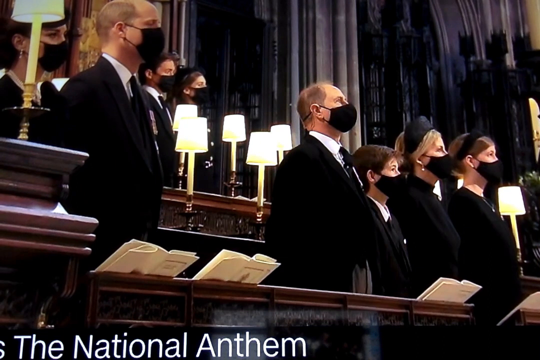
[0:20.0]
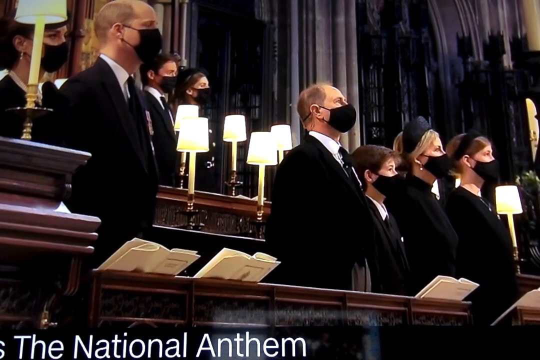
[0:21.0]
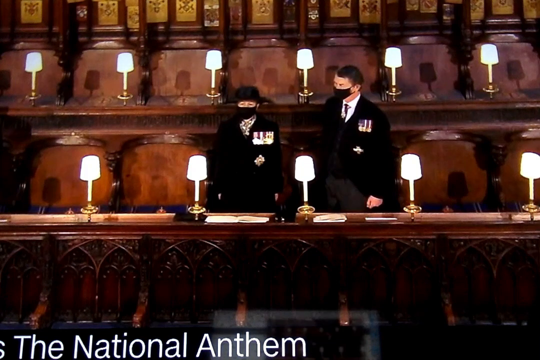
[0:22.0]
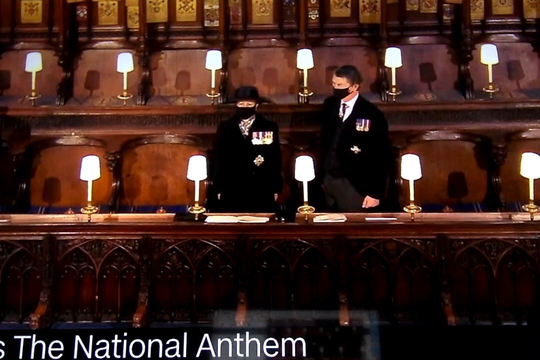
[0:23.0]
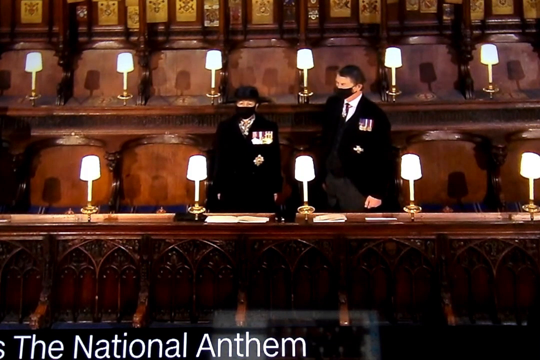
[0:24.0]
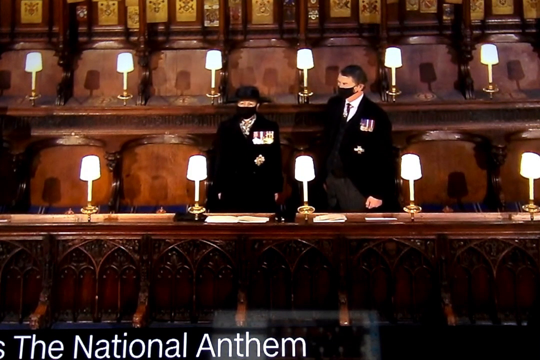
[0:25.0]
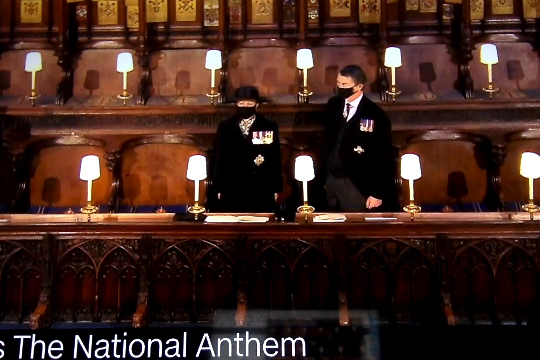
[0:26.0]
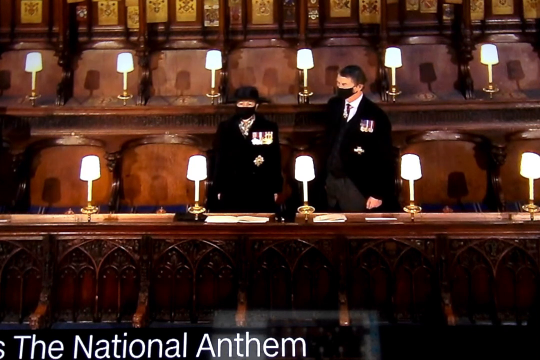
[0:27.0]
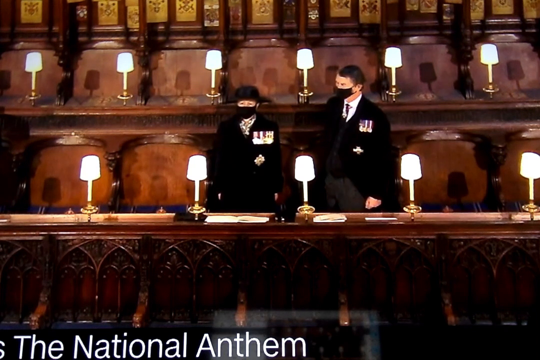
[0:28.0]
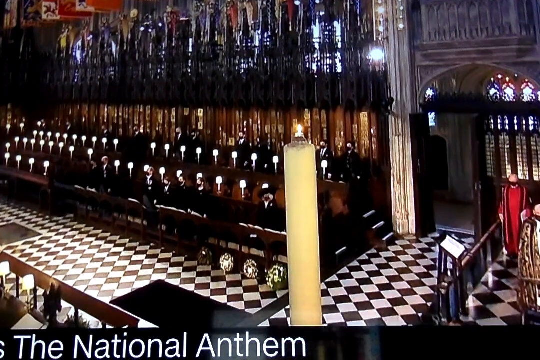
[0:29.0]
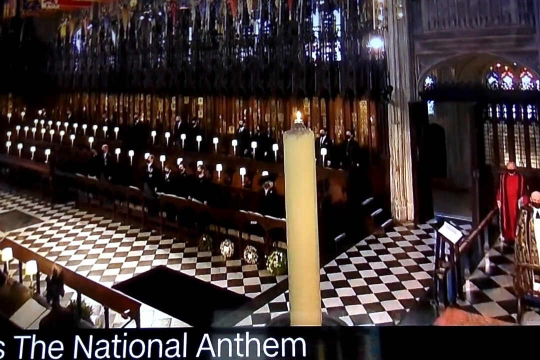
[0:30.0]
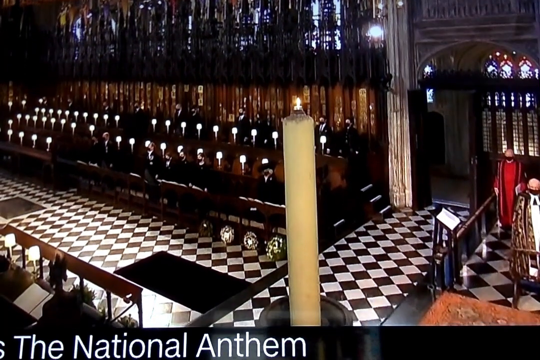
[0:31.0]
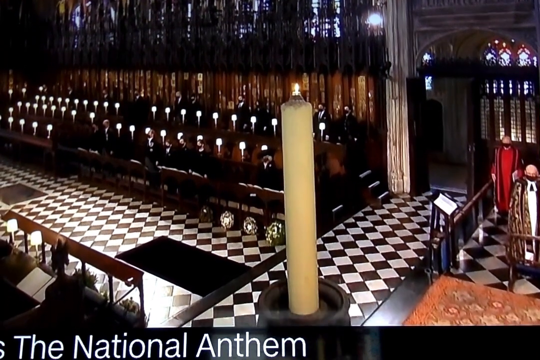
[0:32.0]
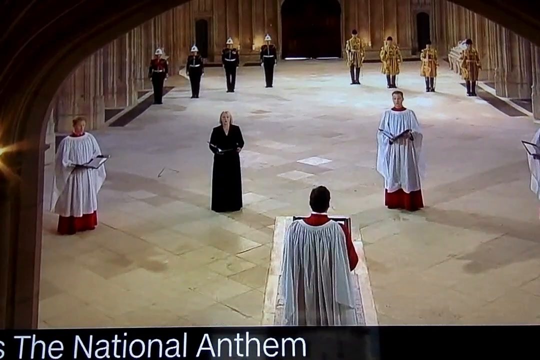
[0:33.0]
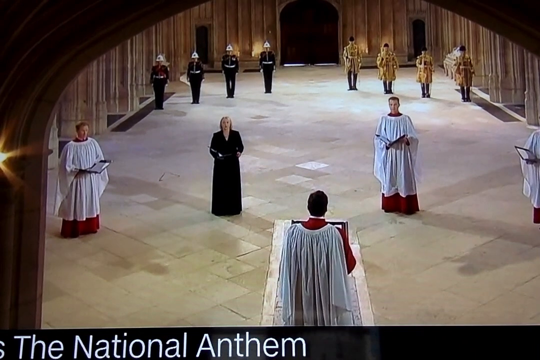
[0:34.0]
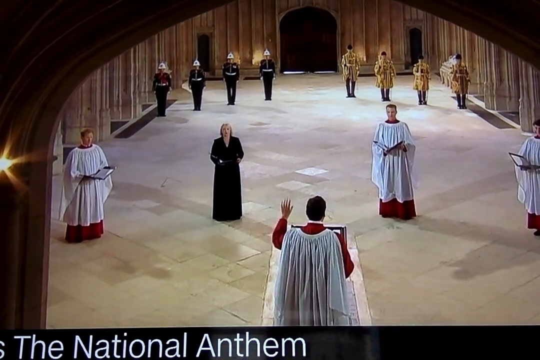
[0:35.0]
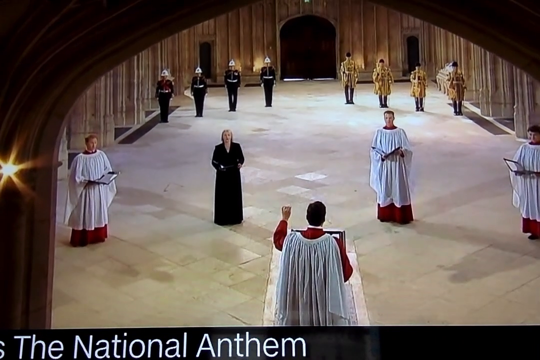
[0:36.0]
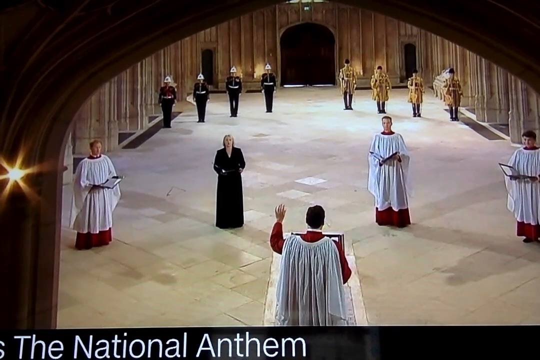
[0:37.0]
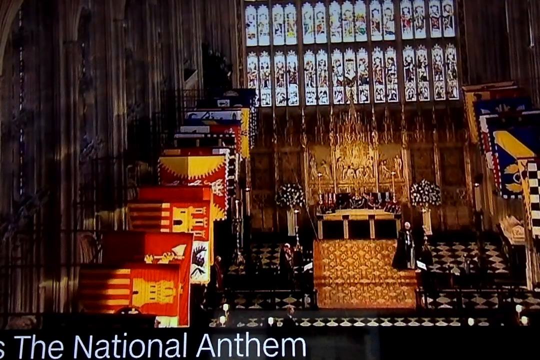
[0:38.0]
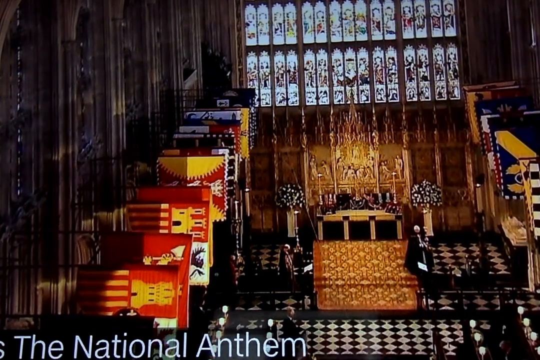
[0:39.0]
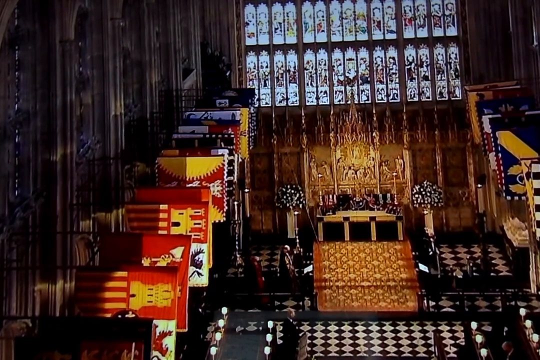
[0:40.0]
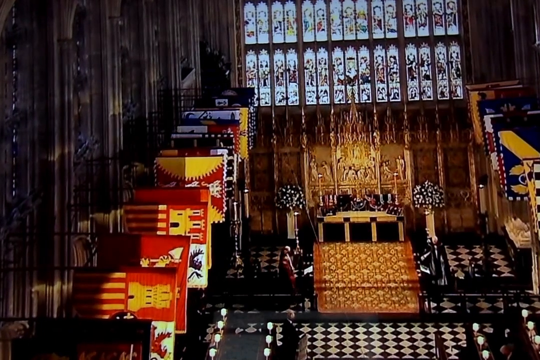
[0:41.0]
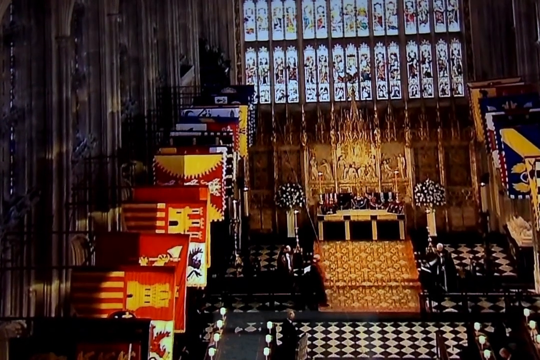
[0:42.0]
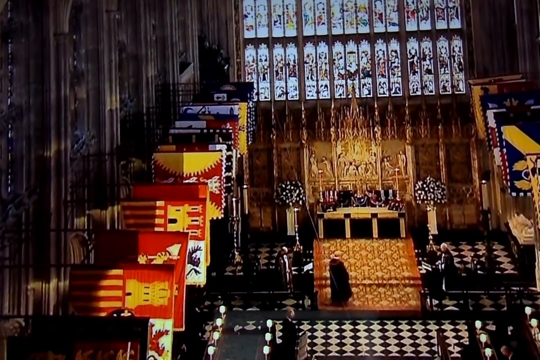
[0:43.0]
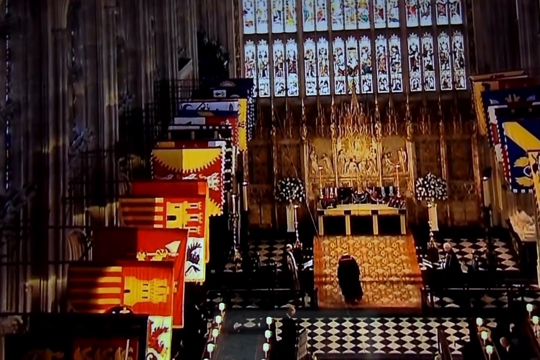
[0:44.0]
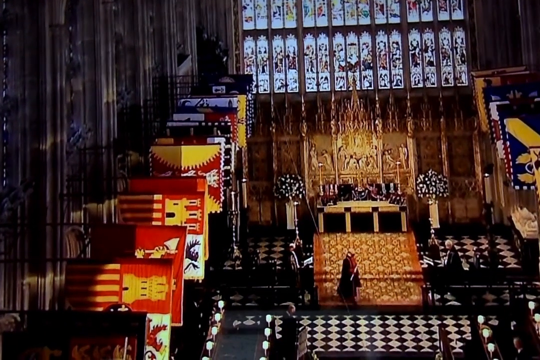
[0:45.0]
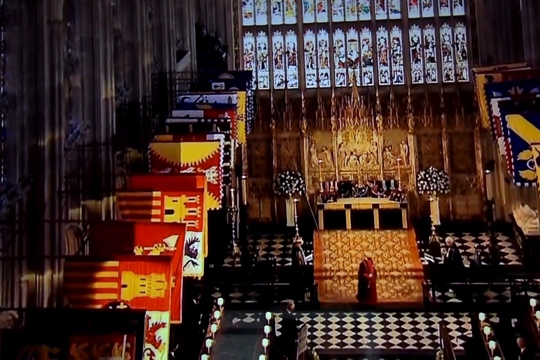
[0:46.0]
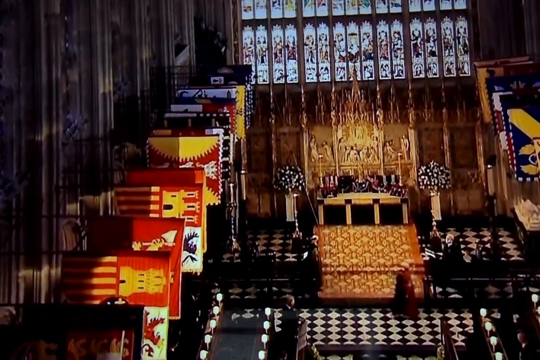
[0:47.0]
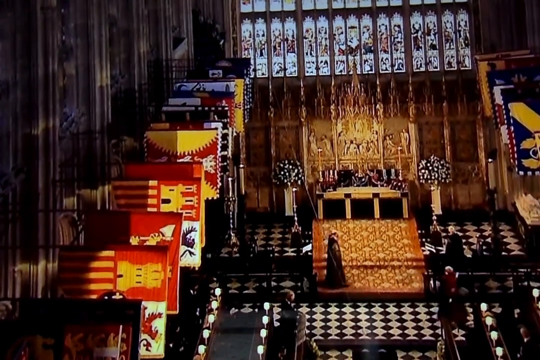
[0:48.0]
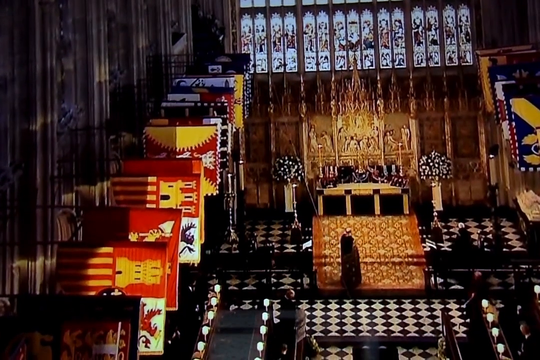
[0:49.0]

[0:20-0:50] People stand dressed in black: the men wear black suits and the women also wear black attire. They all wear black masks and seem to be standing in front of what looks like a dark brown wooden rail. The video cuts to a man and a woman standing in front of what looks like a long desk, with benches behind; on top of the desk are a whole bunch of lamps that are turned on, and the two appear to just be standing there. It then cuts to a wide angle of the interior of the hall they are in, and then to a man who looks like a priest, wearing white and red, with three people dressed exactly like him facing him. A woman dressed in black also faces him, and they hold what looks like books or notepads. The man in the forefront waves his left arm up and down. The video then cuts back to what looks like the front of a church, with flags on the walls.